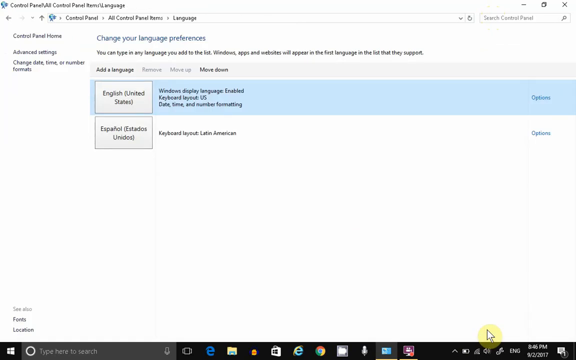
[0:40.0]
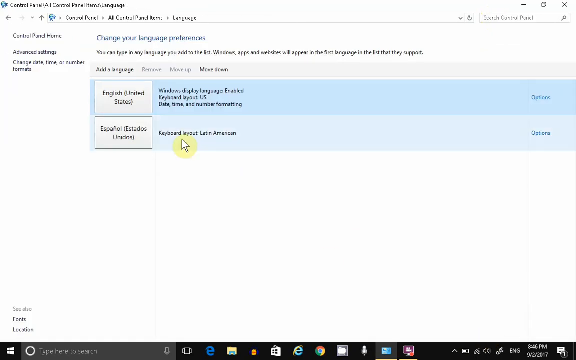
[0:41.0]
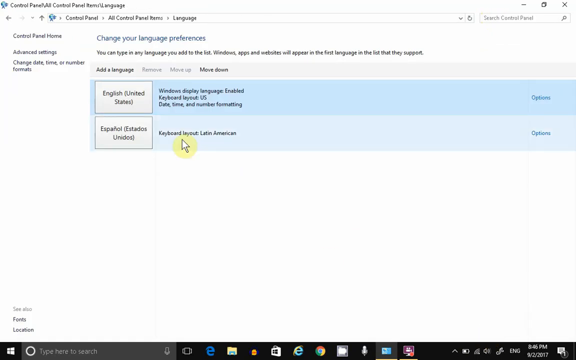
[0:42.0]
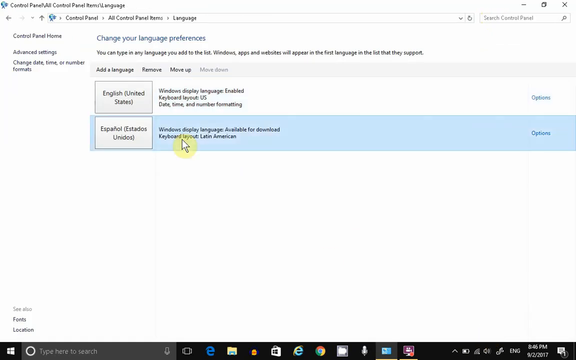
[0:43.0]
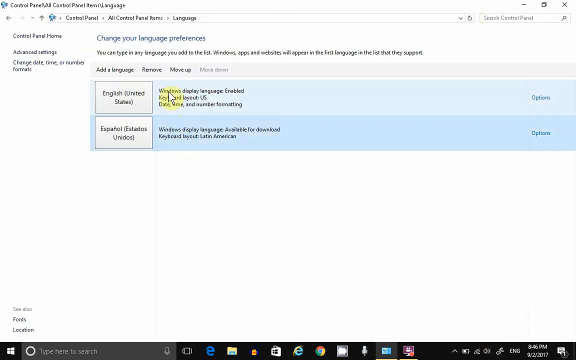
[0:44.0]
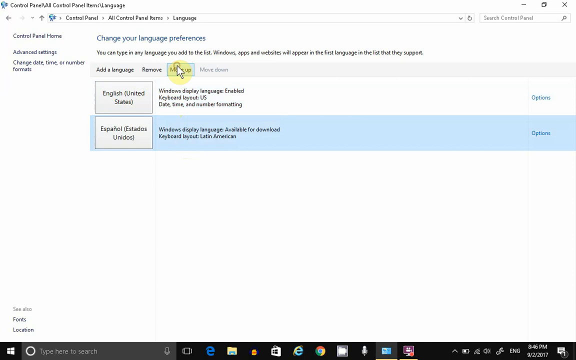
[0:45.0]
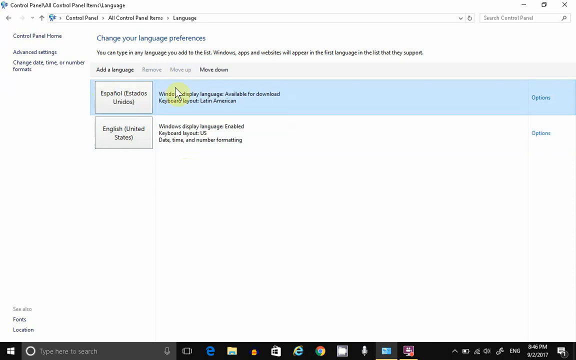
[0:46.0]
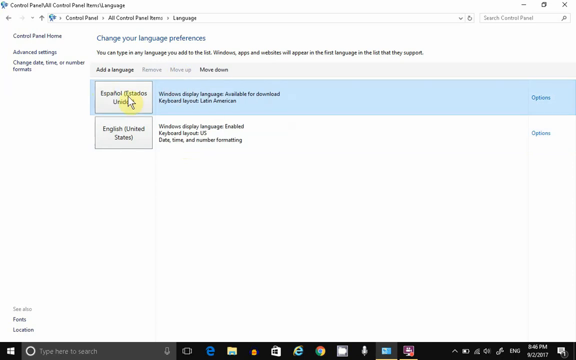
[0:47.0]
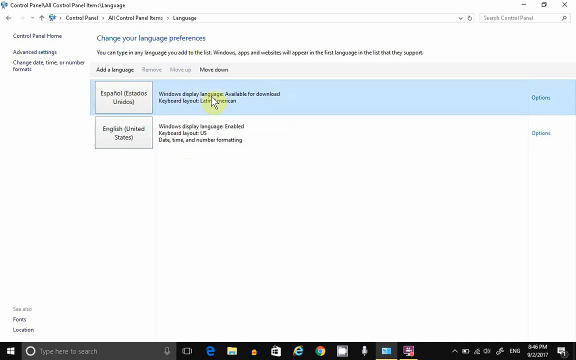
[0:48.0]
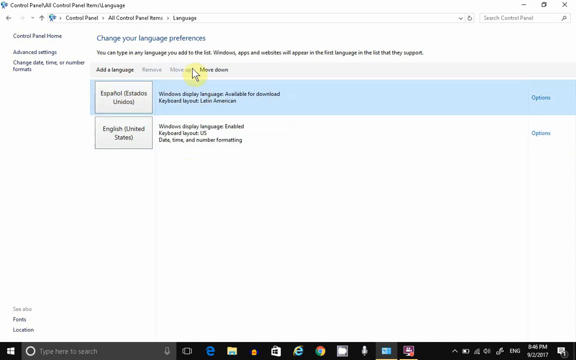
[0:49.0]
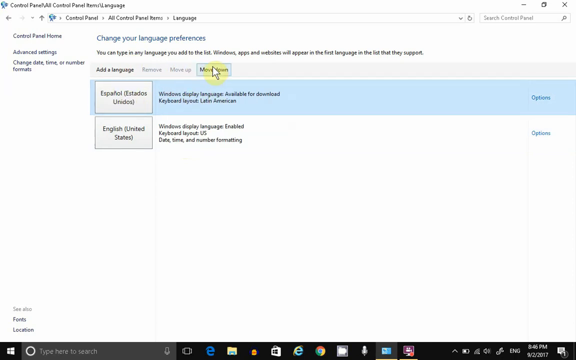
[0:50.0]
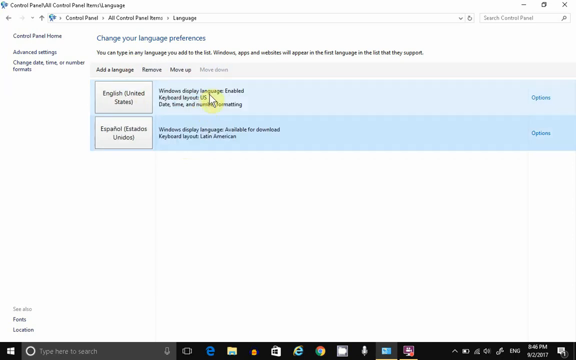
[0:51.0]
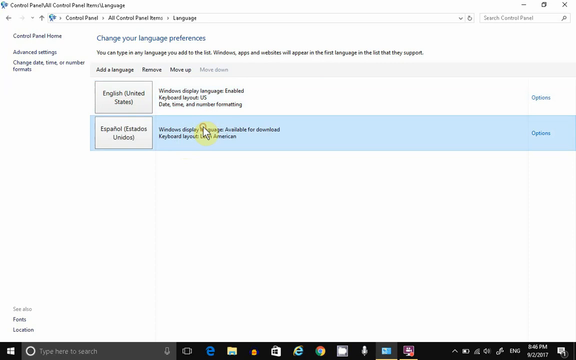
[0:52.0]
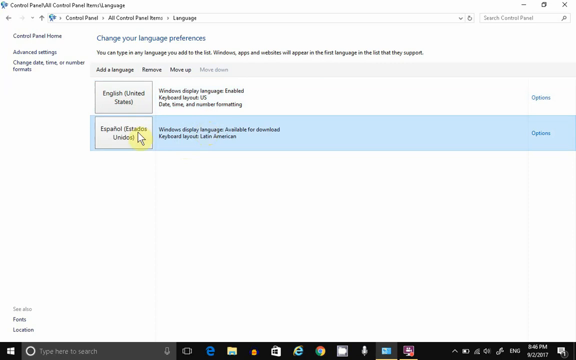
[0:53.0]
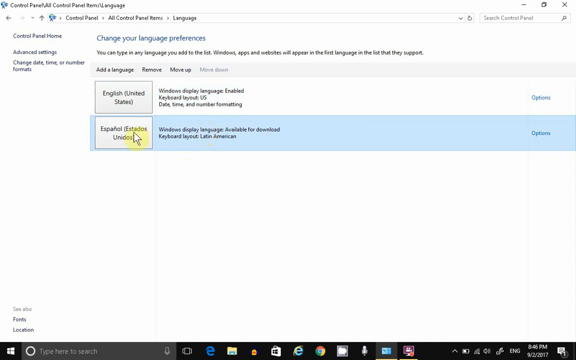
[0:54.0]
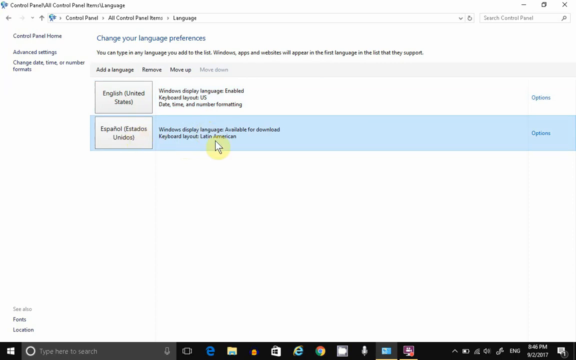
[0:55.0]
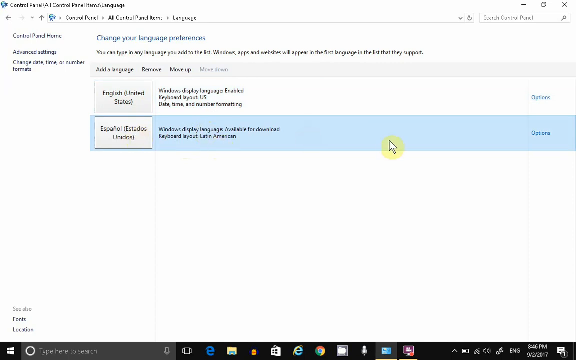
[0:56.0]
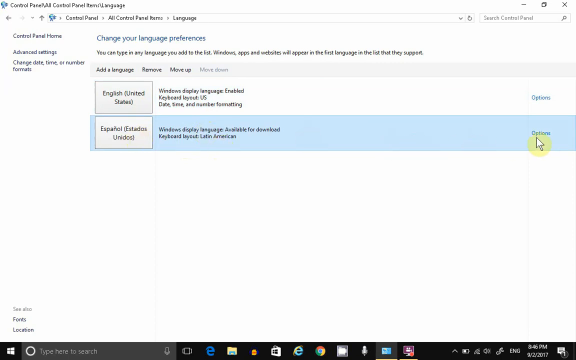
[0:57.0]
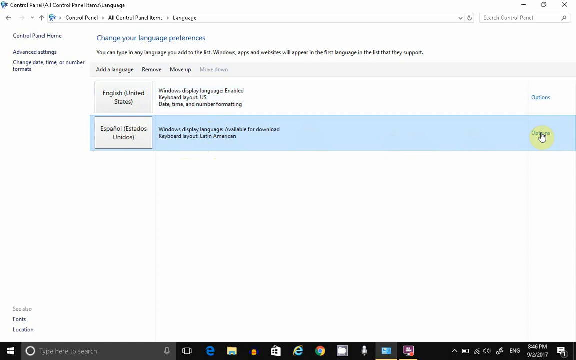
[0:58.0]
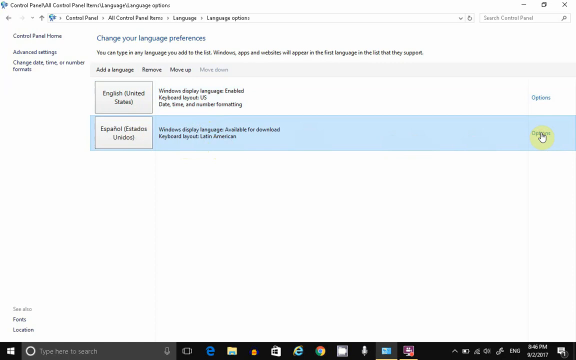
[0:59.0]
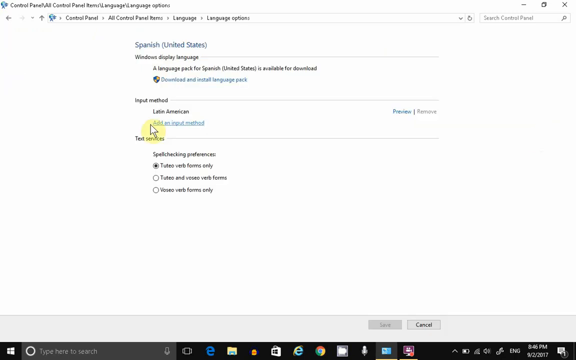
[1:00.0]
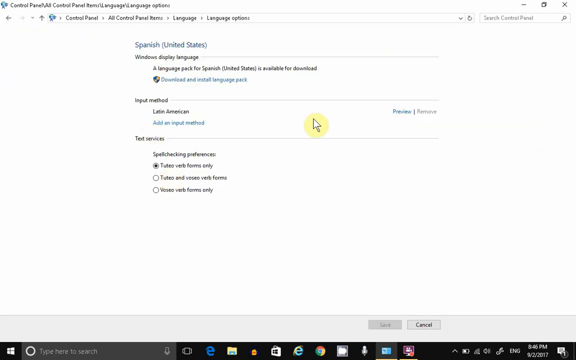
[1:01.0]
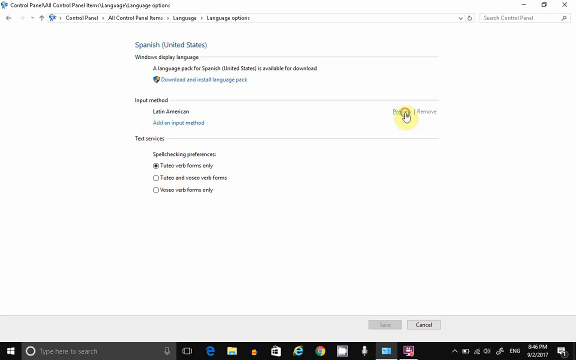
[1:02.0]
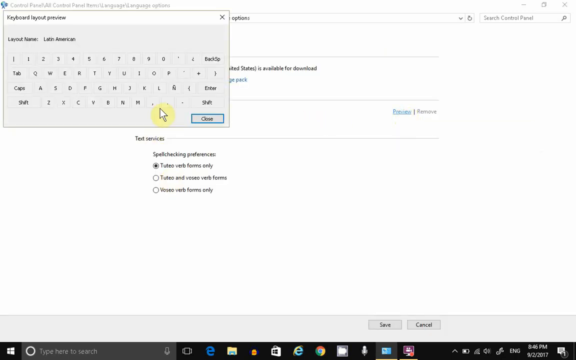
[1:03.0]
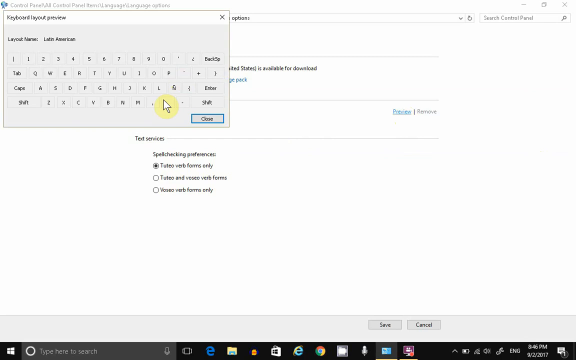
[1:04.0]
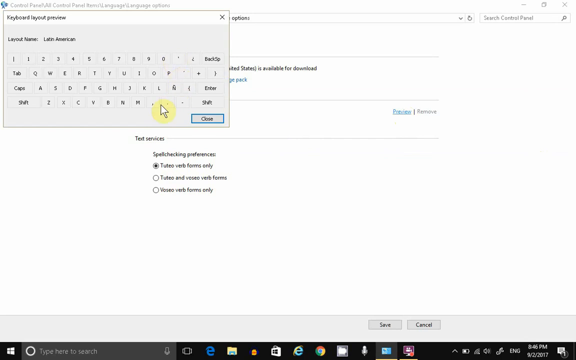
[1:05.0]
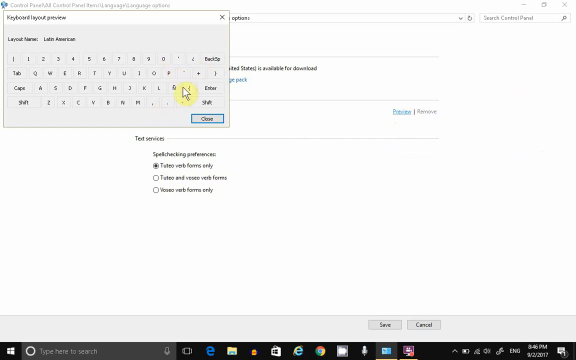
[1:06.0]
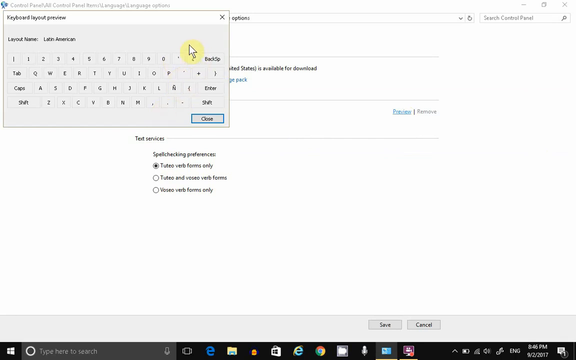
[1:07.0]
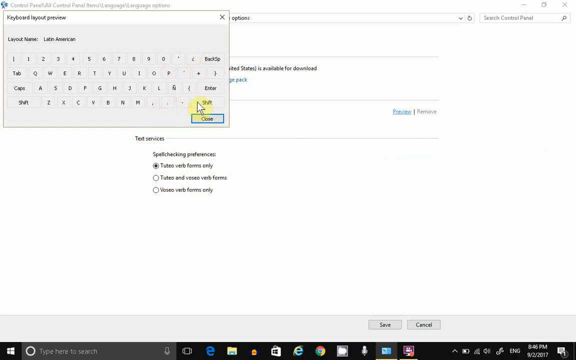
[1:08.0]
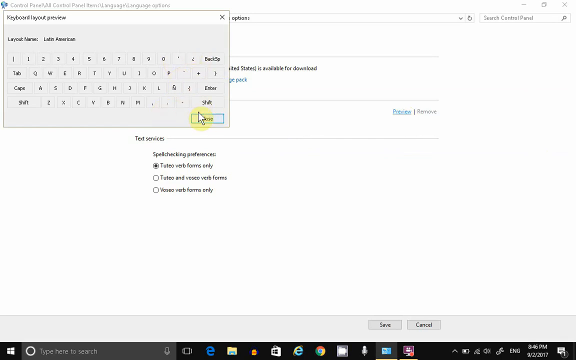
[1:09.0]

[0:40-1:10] The screen shows information about adding a language. A person maneuvers a cursor, which is surrounded by a yellow circle, and clicks on English while choosing a language. Once the category is clicked, it is highlighted in blue across the entire screen. They click on options and a pop-up appears. The cursor moves rapidly and randomly from place to place, indecisively. A keyboard with letters pops up, and the cursor keeps moving from the top of the page to the bottom. The screen remains an adding-language screen. The cursor moves over and clicks on the right side of the screen.